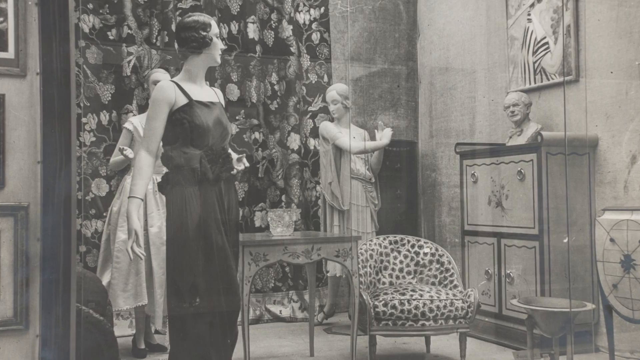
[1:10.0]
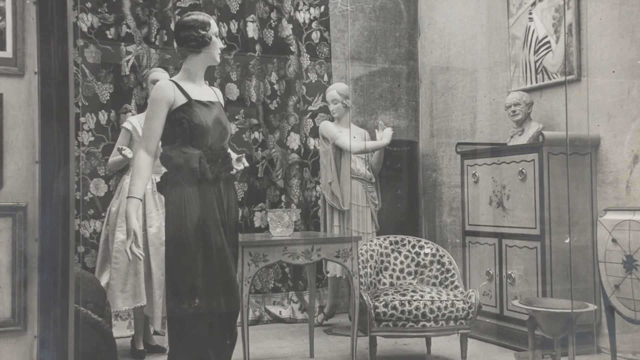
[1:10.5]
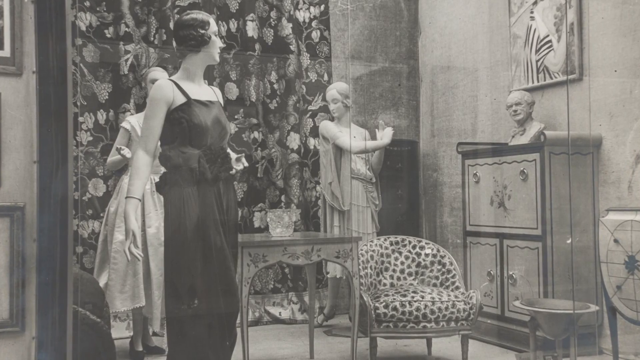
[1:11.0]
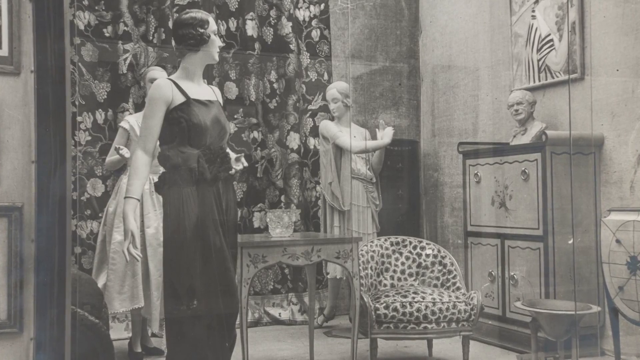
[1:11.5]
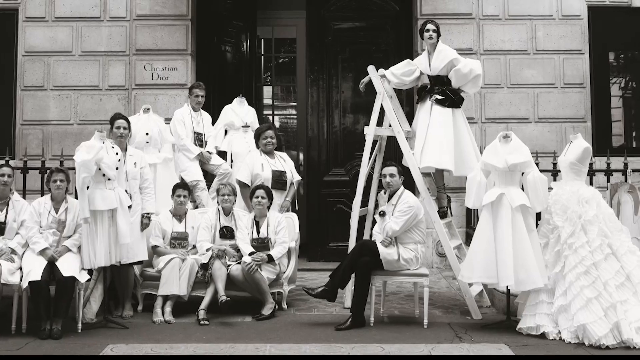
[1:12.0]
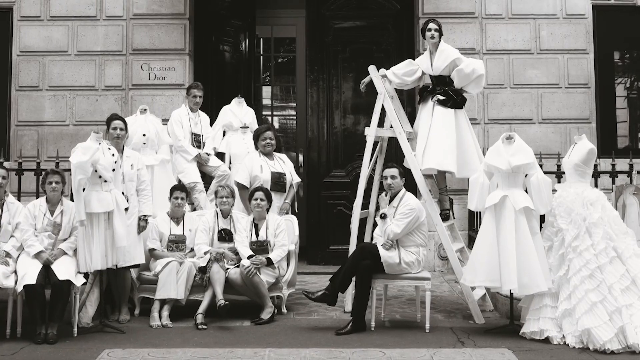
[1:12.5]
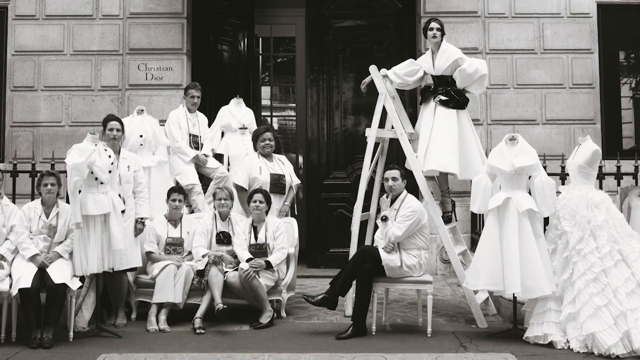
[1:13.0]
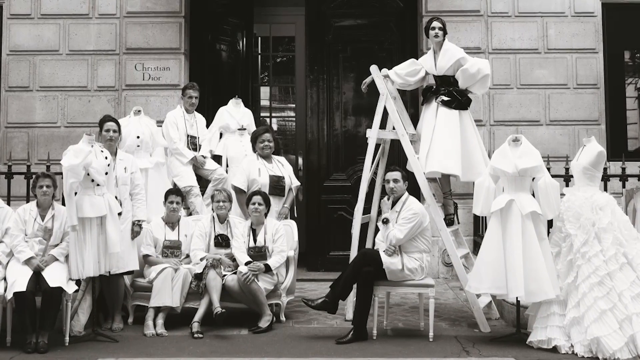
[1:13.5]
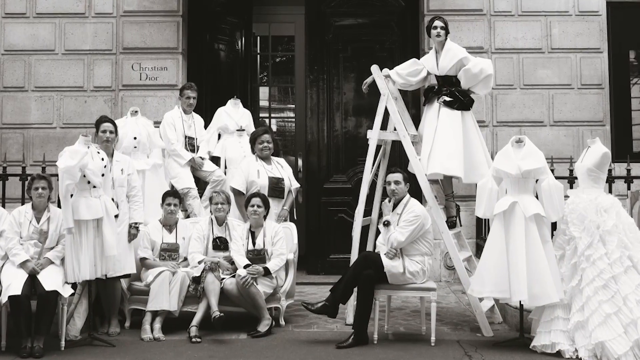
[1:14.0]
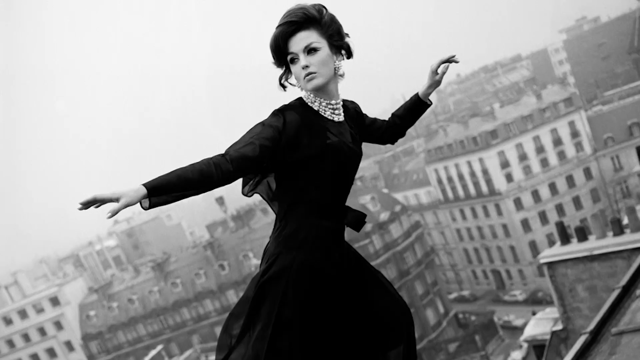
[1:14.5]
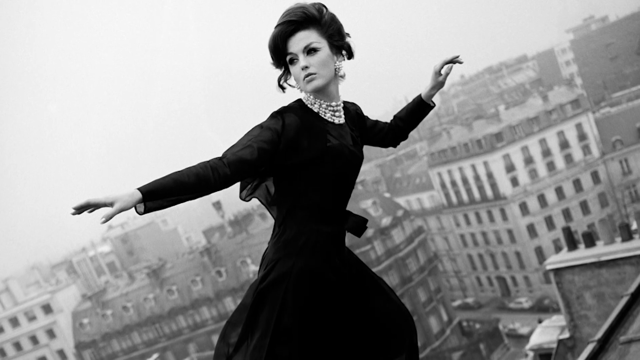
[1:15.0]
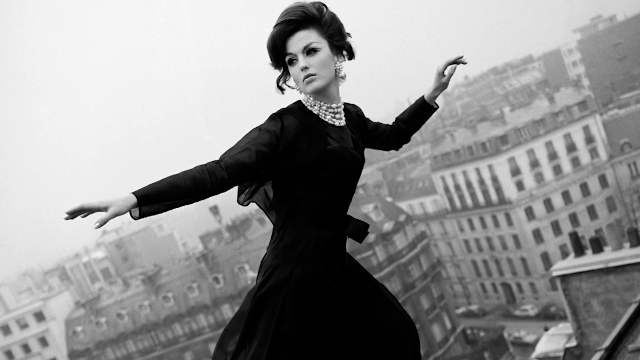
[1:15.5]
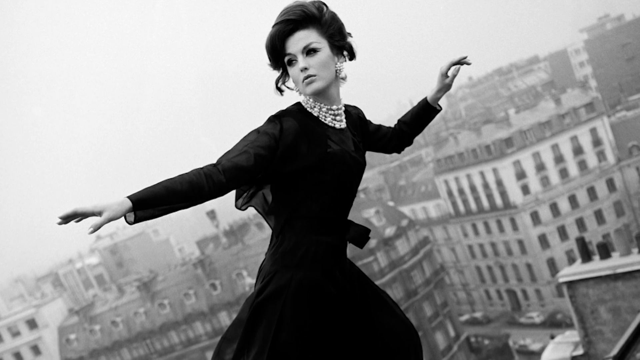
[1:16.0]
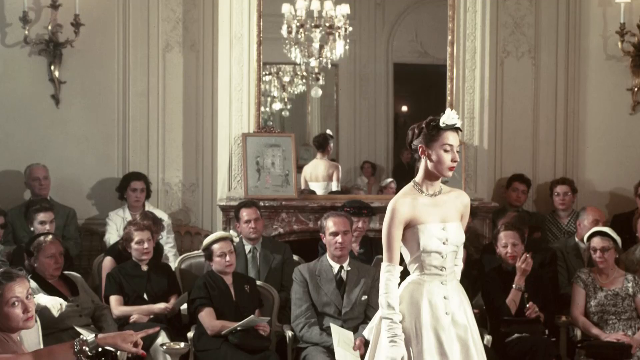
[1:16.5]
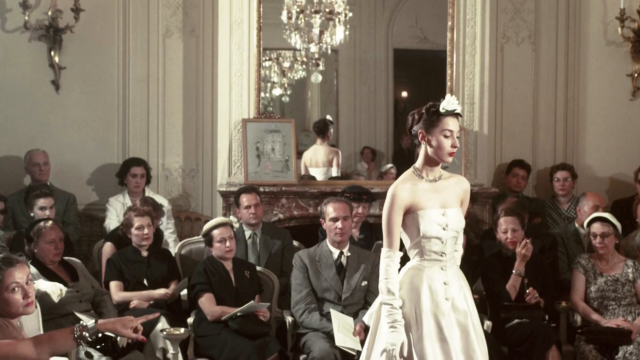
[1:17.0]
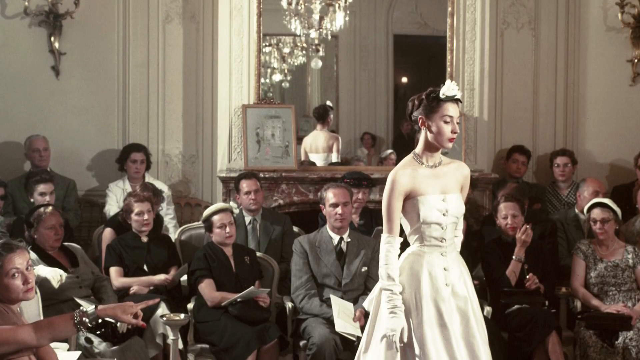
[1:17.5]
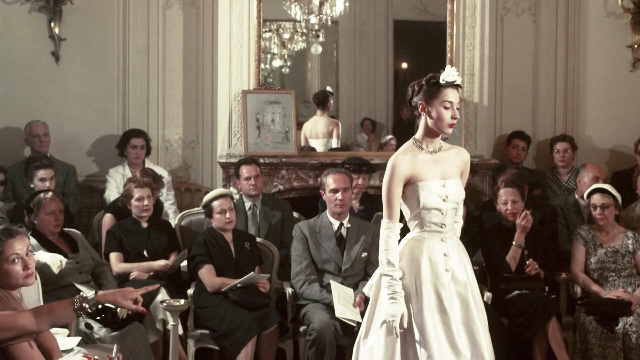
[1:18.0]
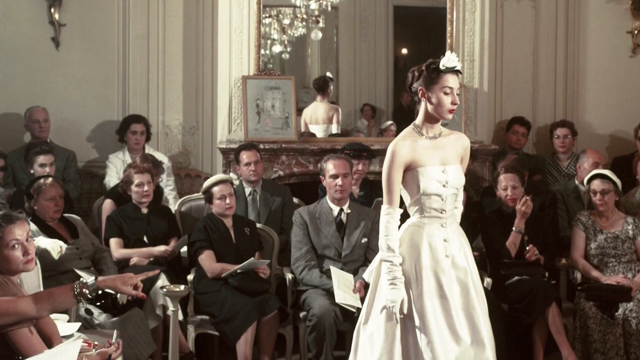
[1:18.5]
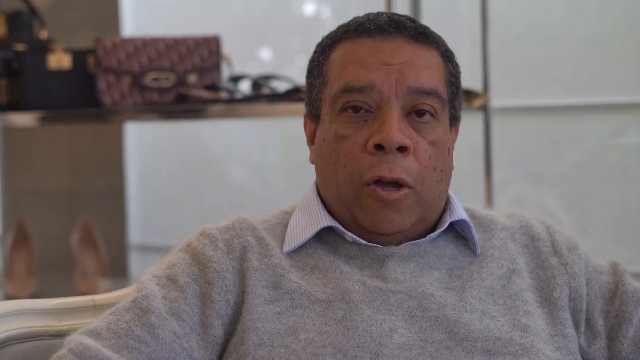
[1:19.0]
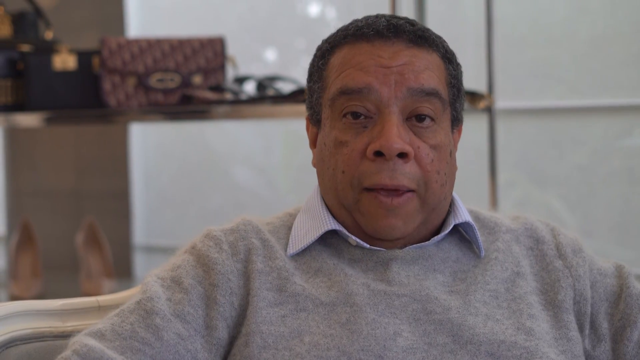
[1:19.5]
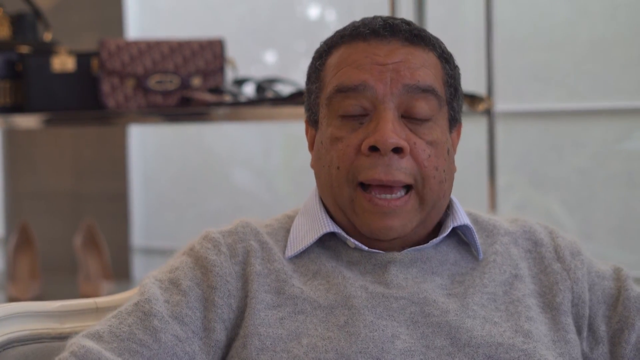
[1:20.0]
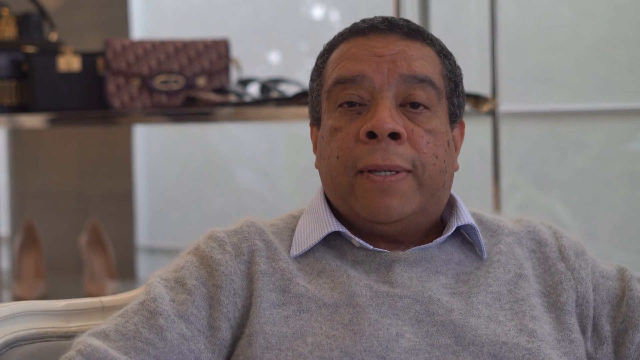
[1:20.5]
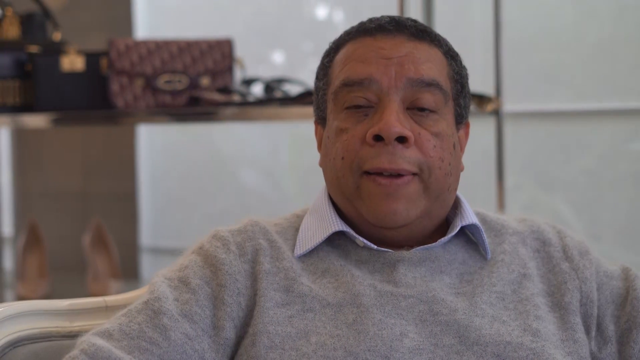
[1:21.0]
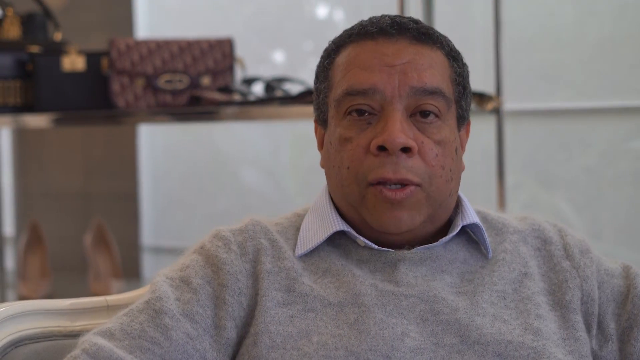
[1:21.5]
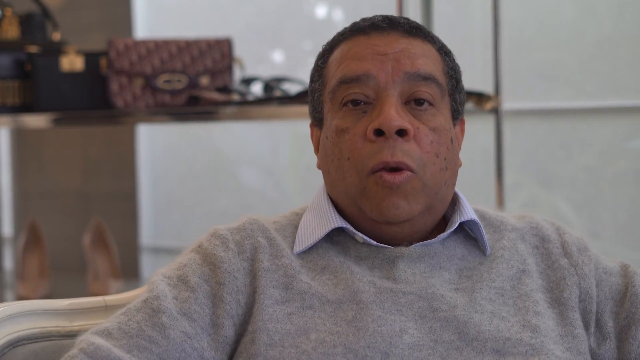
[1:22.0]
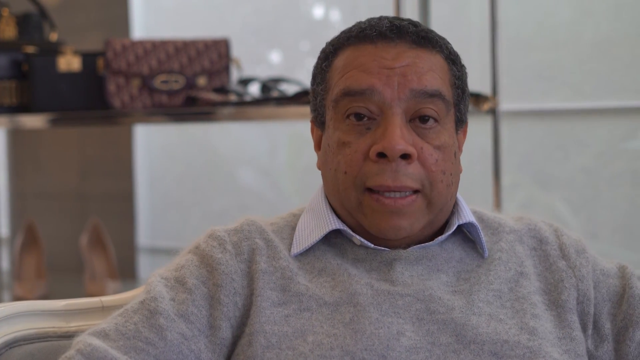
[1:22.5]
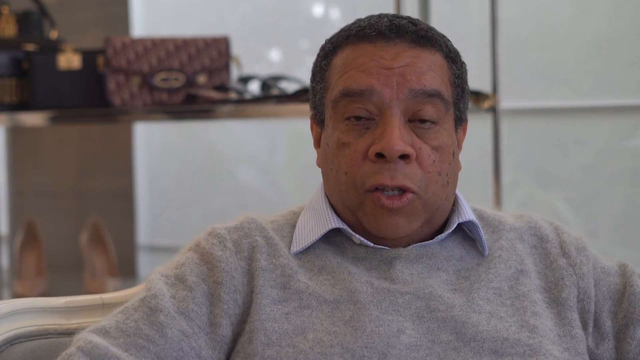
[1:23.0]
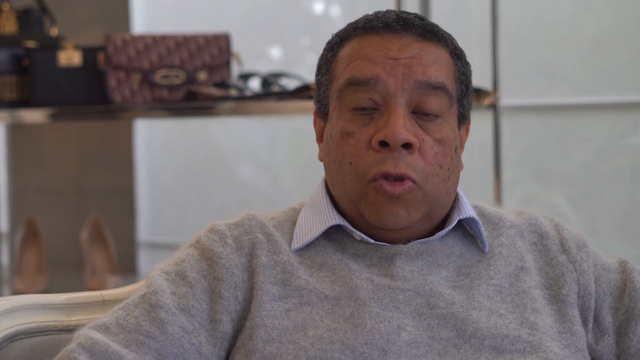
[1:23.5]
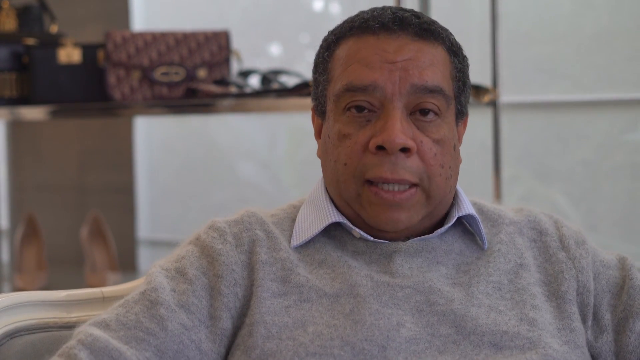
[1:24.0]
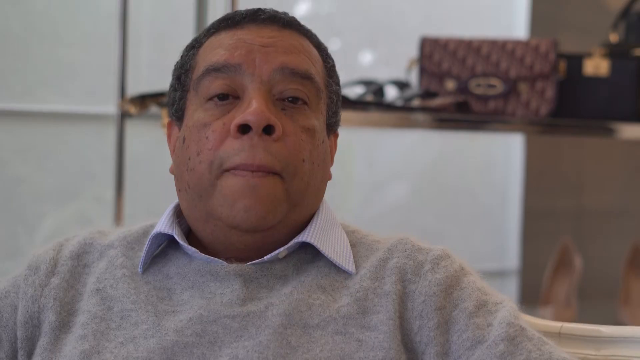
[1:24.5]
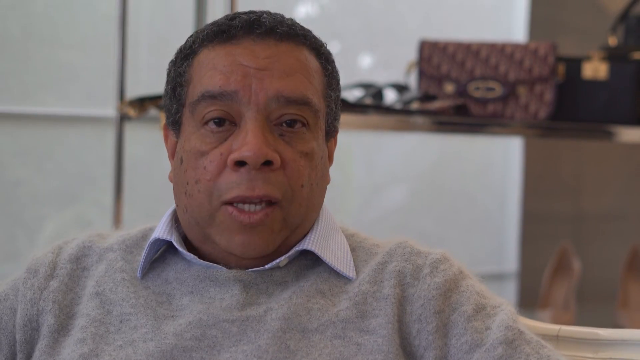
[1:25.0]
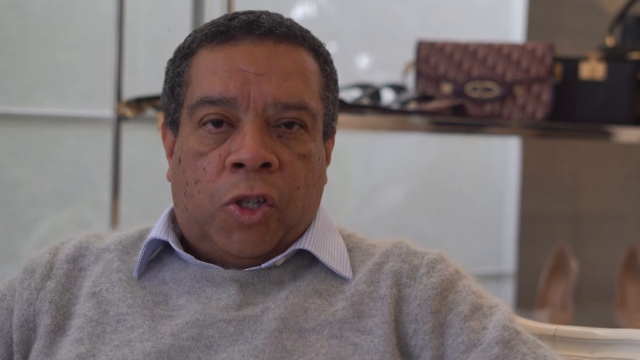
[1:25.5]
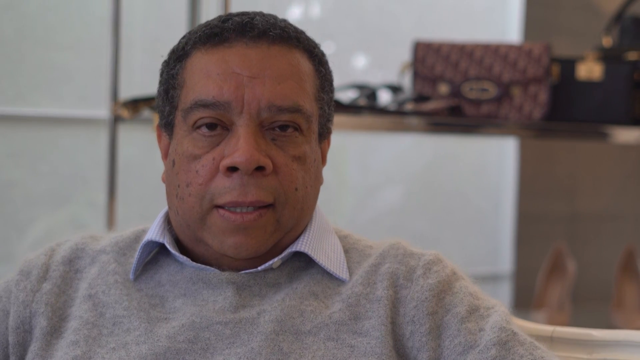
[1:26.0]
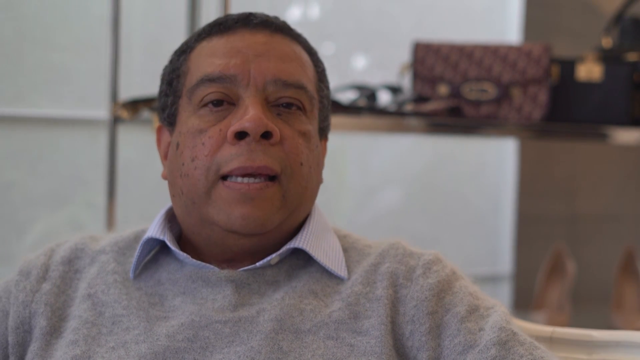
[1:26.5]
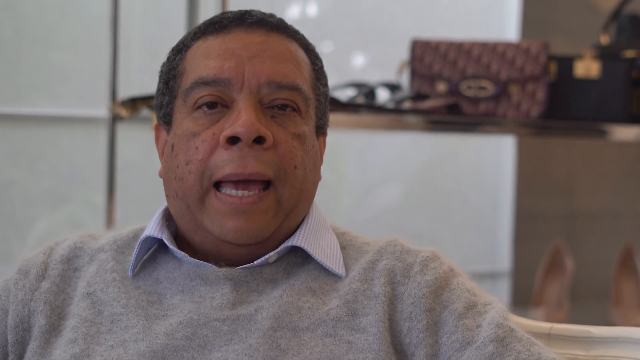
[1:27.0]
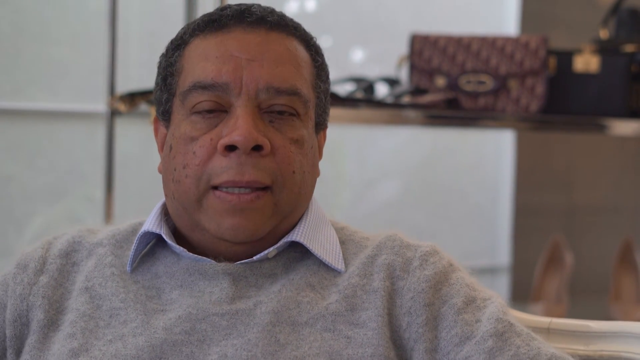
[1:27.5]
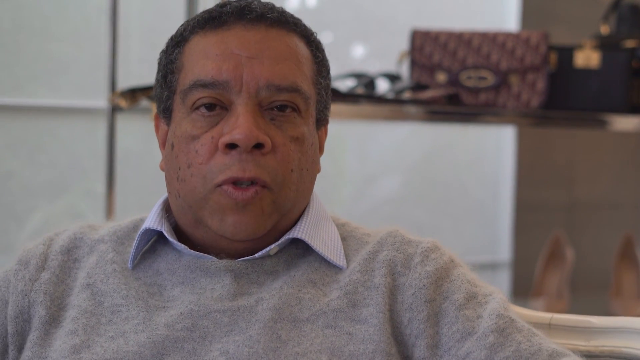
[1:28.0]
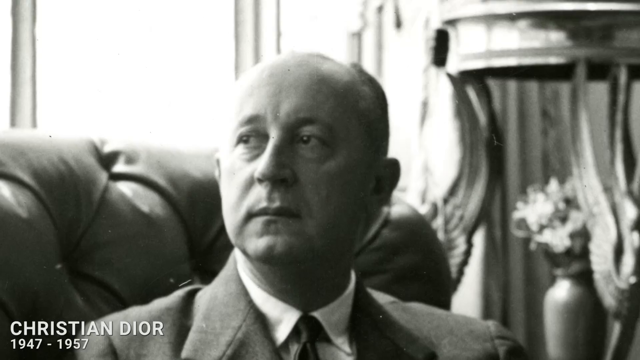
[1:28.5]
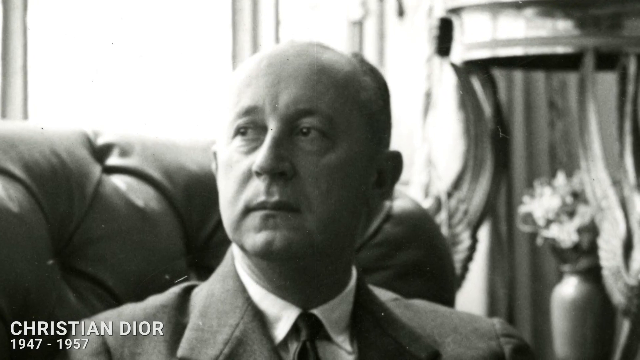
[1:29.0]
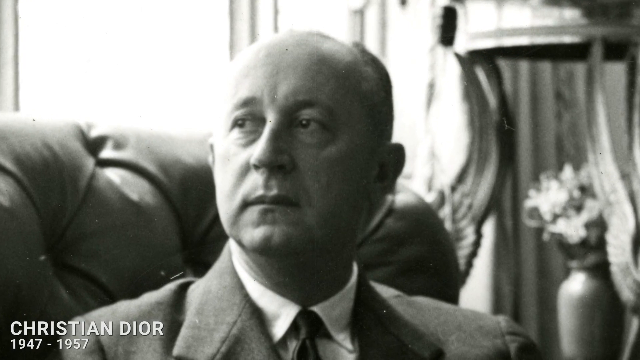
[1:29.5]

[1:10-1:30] More black-and-white scenes from the past follow. A house is shown with several people in front of it, all dressed in white clothes that look like doctor's vests, with black pants. A woman is on a ladder in front of the house, which has white walls and very large black doors and looks huge. The doors open and close. A photo appears of a woman in a black dress with a gold necklace, her hair neatly combed to the side and her arms open, her left arm a little more curved than her right arm, which is very stretched. The man keeps talking, and the image turns white at the end.